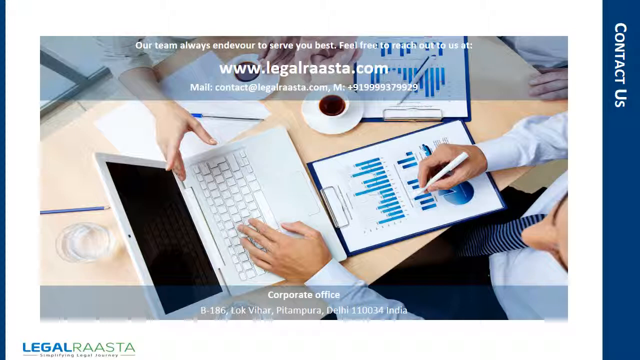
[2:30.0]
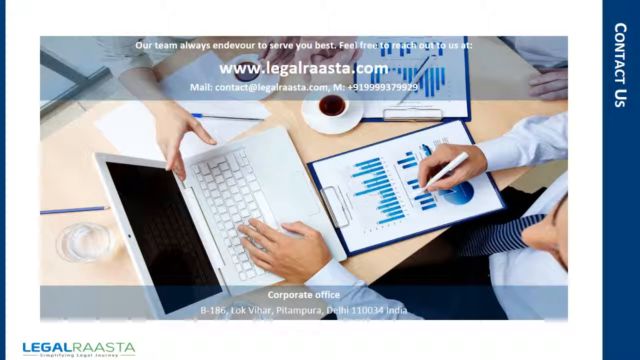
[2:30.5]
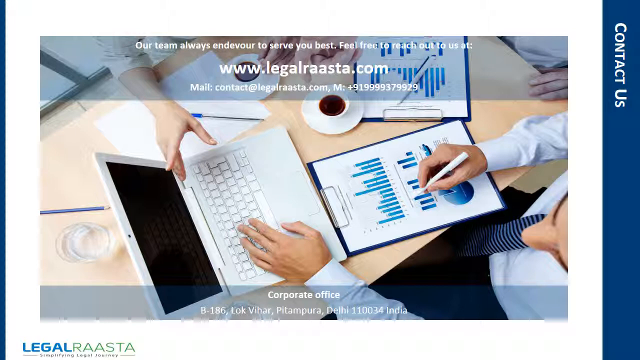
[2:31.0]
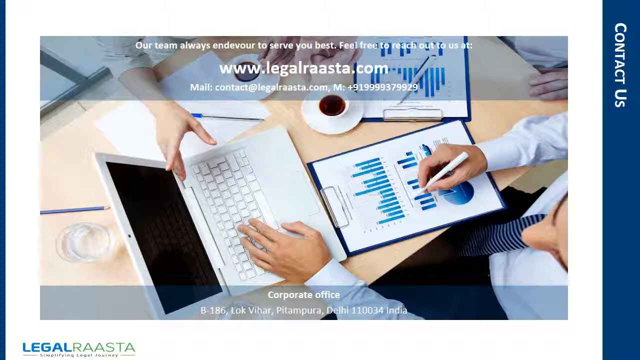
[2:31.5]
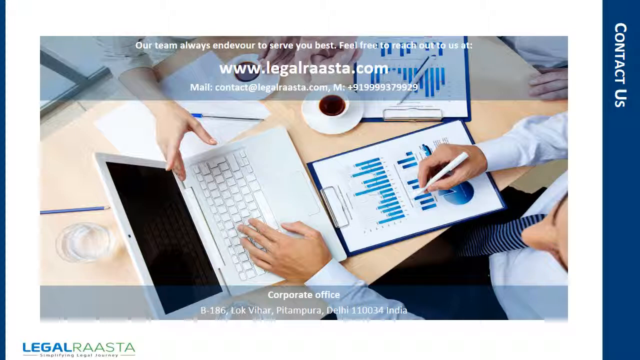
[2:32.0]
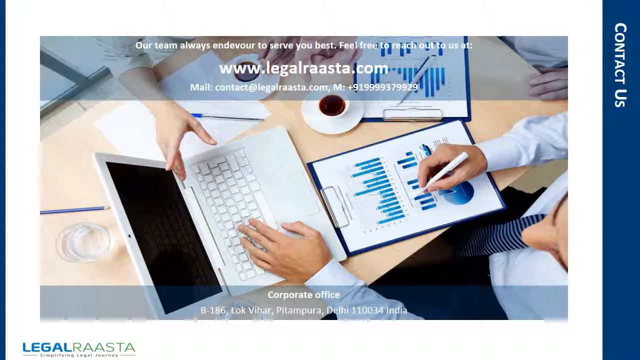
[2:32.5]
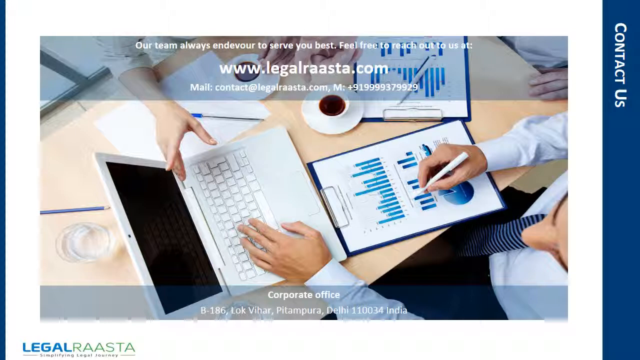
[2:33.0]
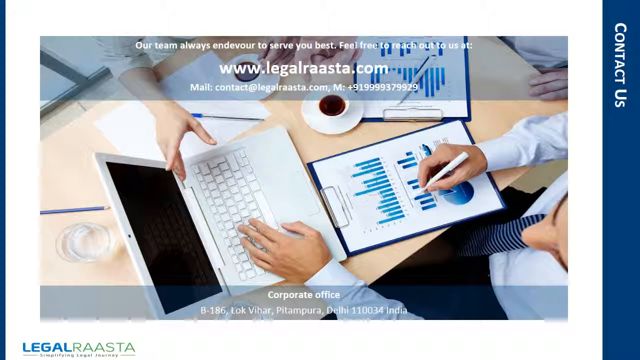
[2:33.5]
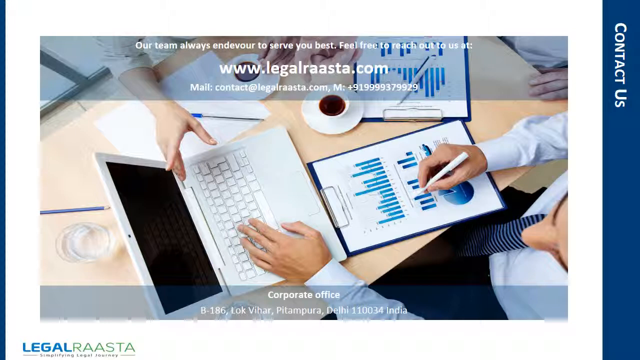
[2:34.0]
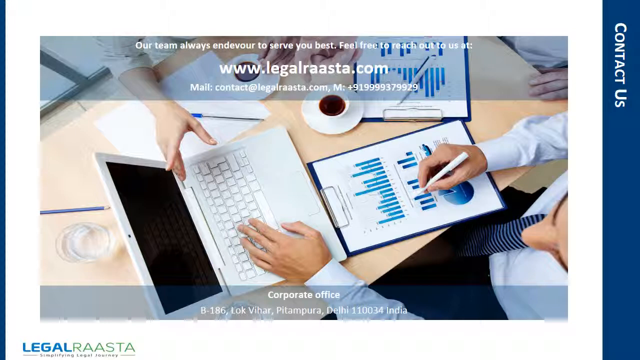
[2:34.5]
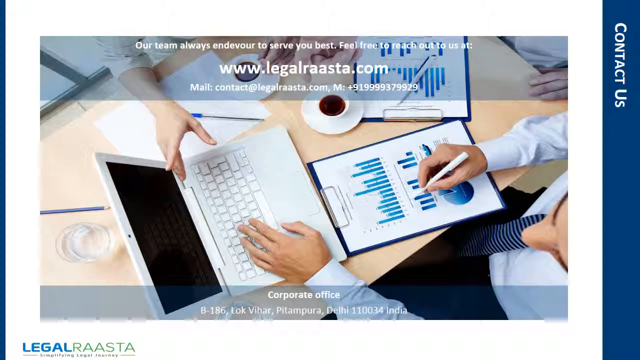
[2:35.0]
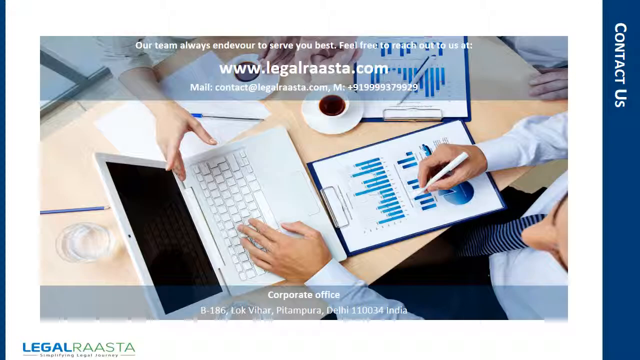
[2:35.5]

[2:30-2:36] The contact us slide shows a large image of a light brown desk holding a white laptop, a few clipboards with papers bearing different charts, and two cups of coffee. Three pairs of arms and hands are working: one person is typing on the keyboard, one is writing on a clipboard, and the other is pointing to the computer screen. Only a close-up of the arms, hands and supplies on the desk is visible. A transparent dark overlay runs across the top of the image with white text reading "our team always endeavor to serve you best. Feel free to reach out to us at www.legalraasta.com," followed by the company's email address and phone number. At the bottom of the image is the corporate office address.